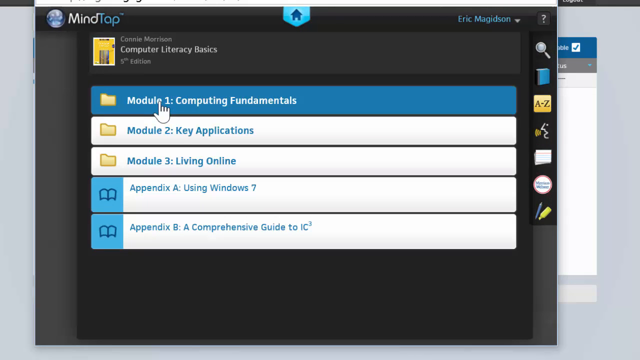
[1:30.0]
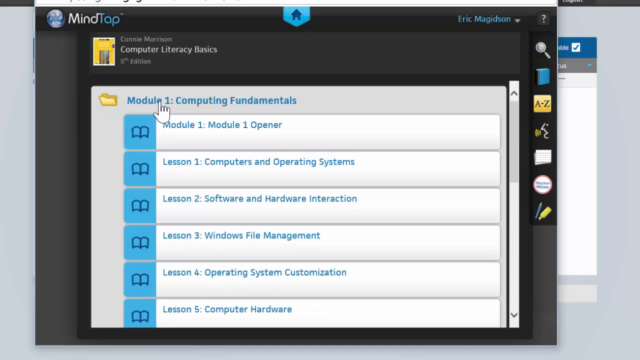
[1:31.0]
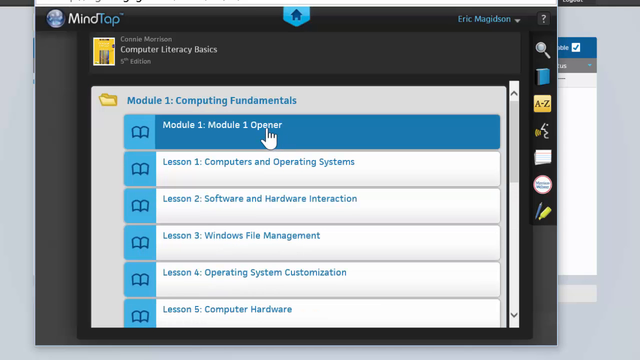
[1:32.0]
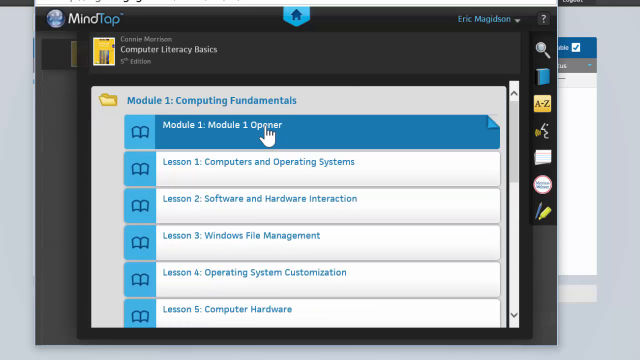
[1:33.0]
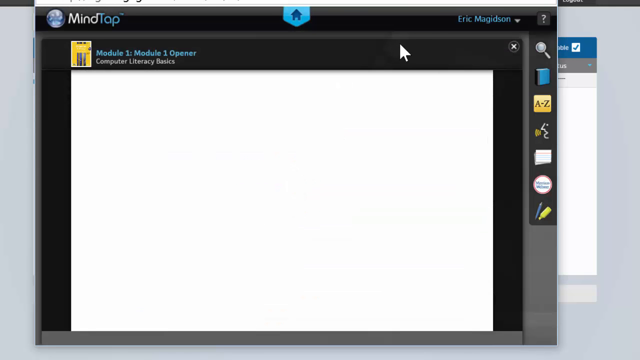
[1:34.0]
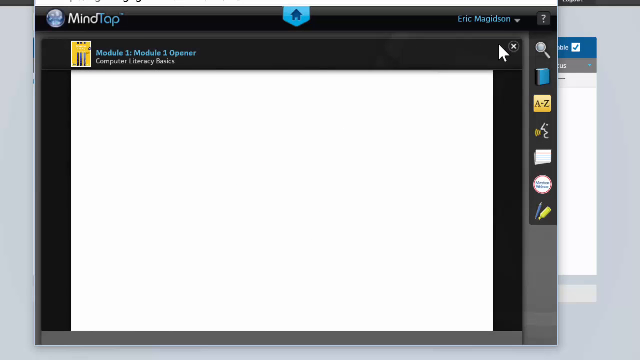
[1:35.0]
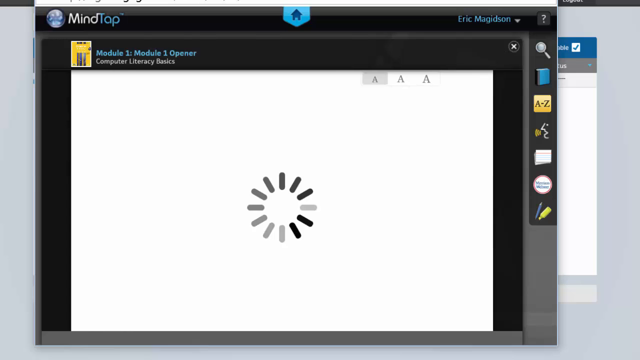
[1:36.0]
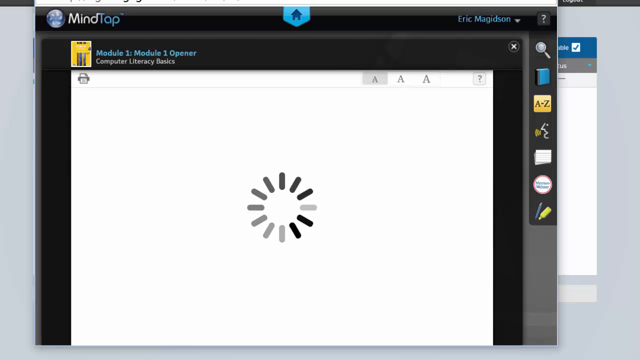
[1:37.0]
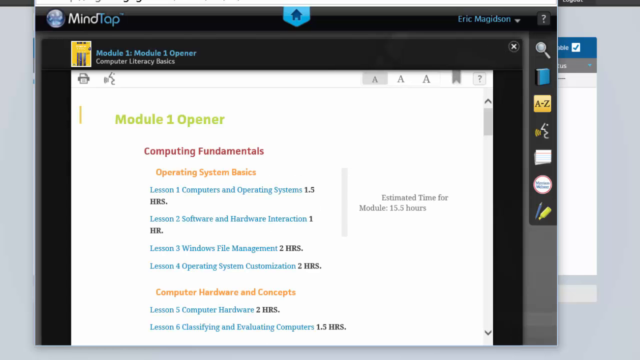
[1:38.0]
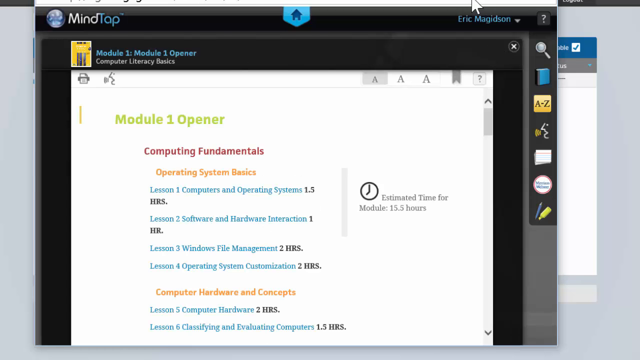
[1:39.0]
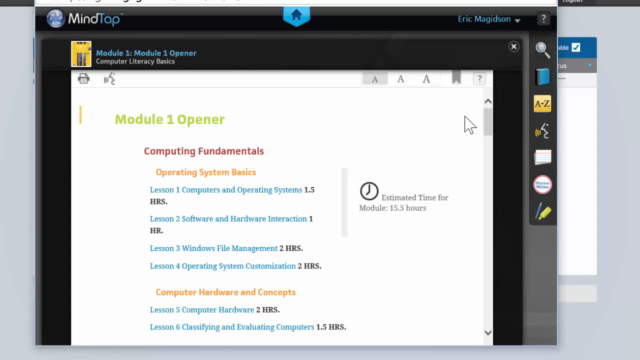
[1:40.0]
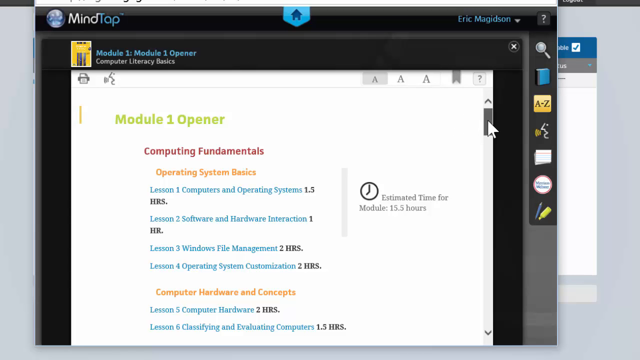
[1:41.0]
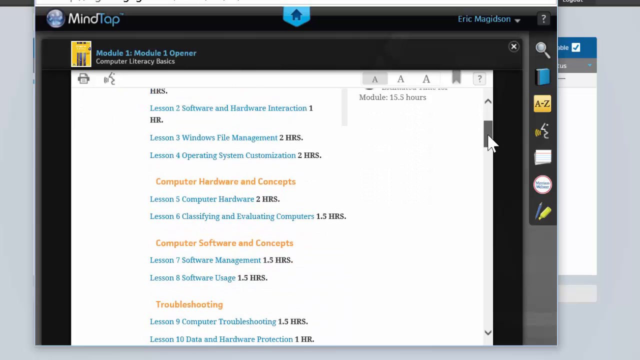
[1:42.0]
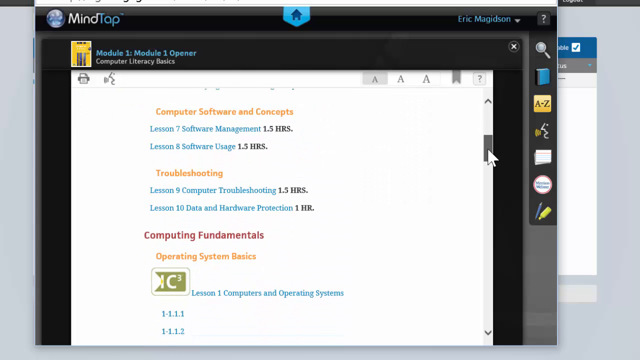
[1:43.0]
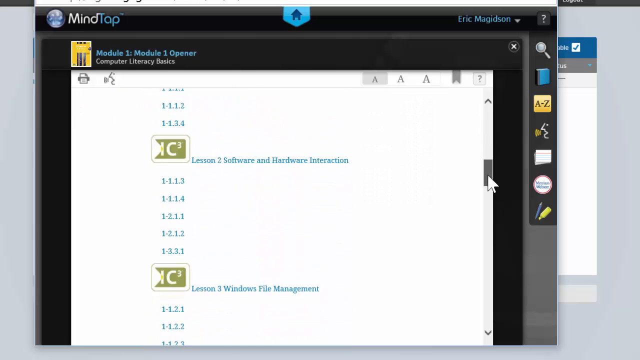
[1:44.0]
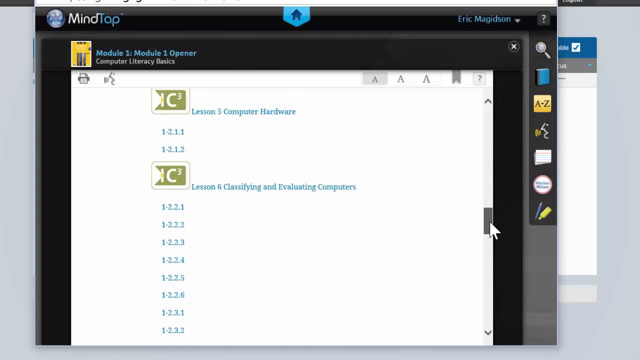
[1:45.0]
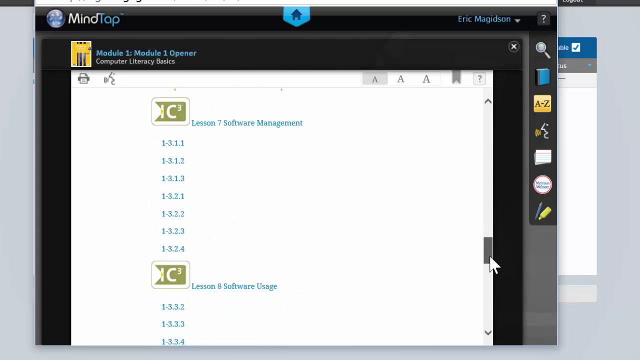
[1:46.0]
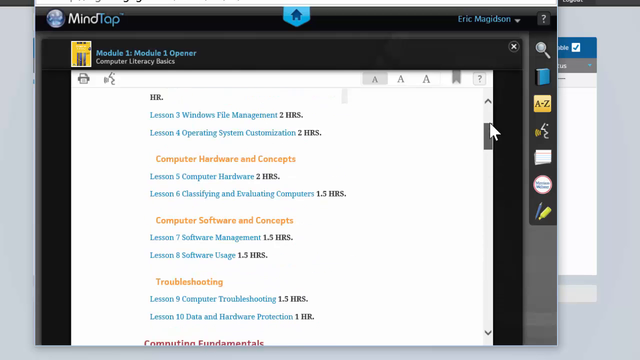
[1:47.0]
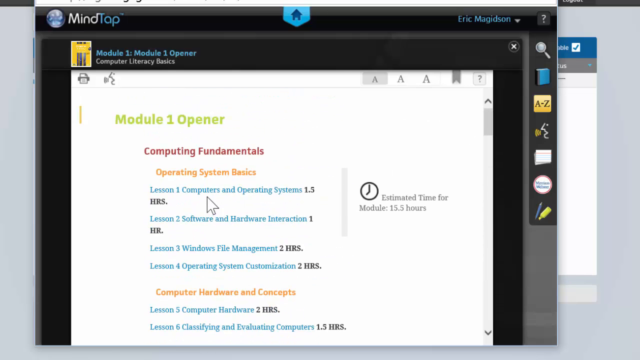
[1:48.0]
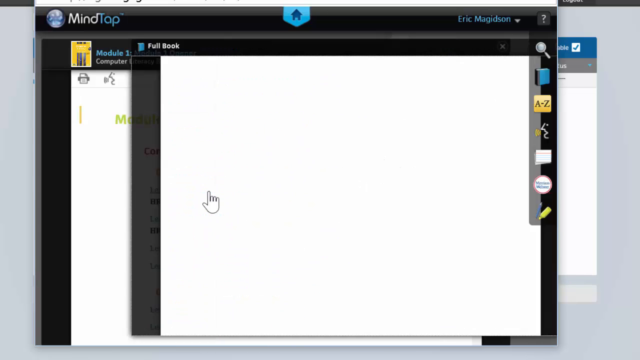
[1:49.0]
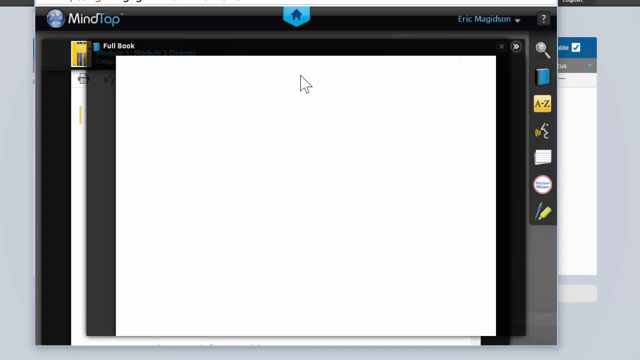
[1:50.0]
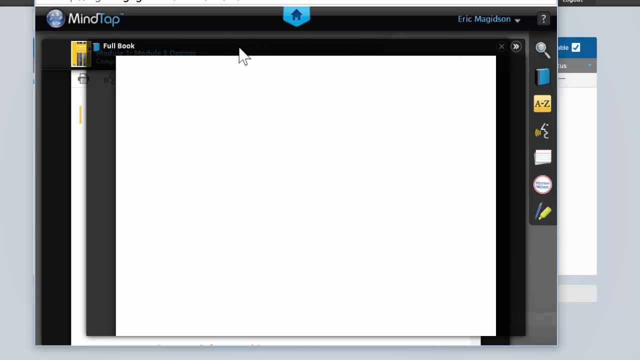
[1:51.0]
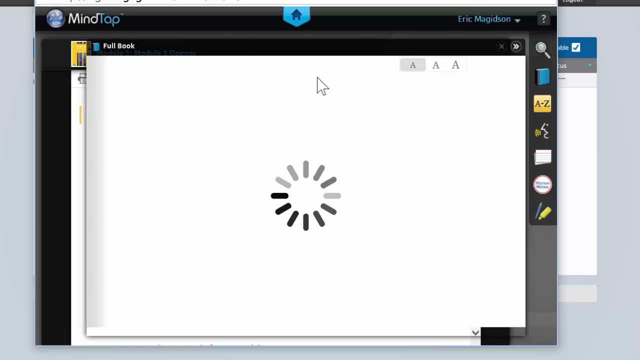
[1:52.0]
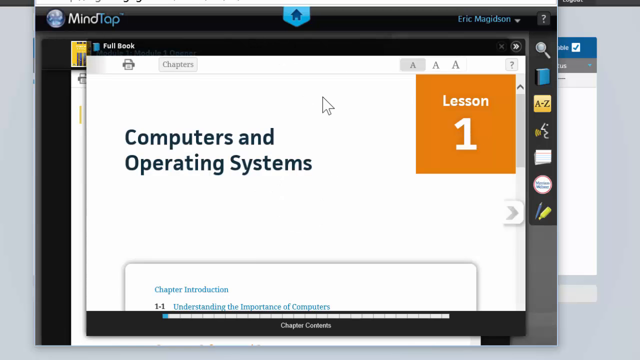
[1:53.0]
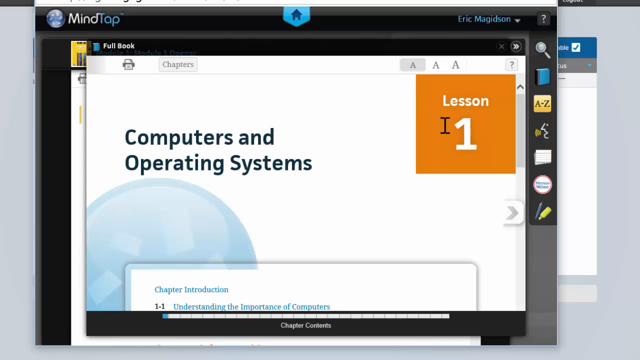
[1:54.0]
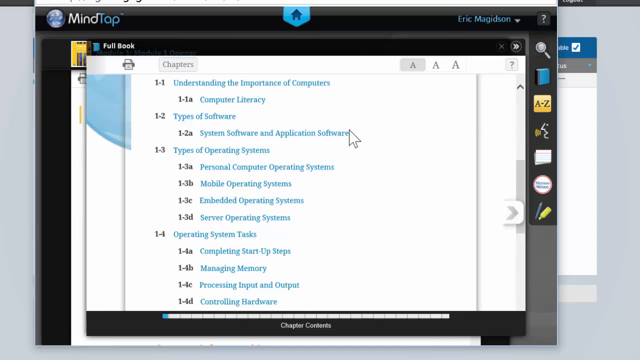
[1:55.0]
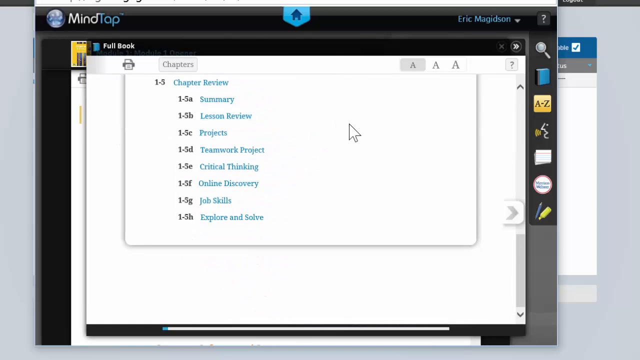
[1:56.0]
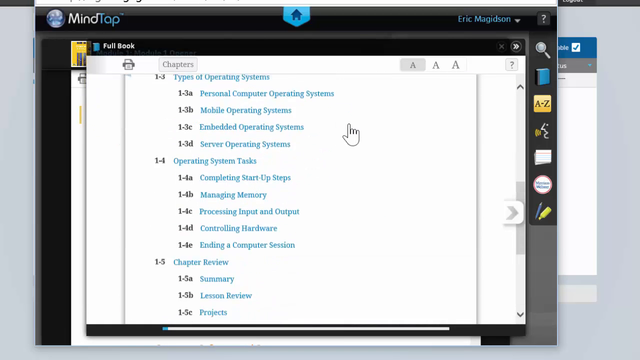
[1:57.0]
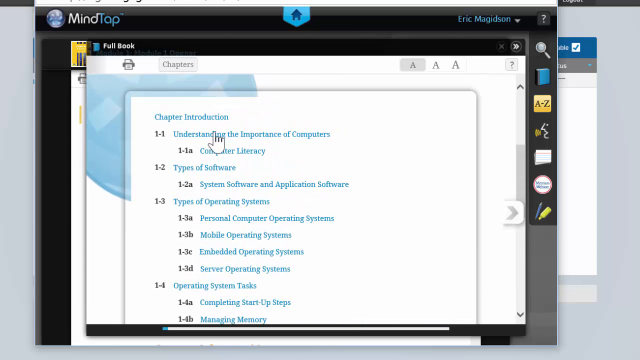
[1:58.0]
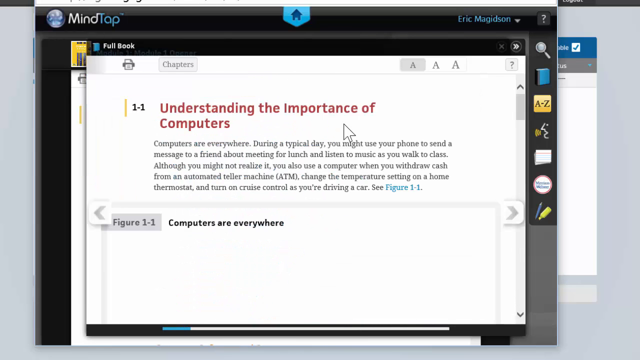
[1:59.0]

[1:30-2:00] A list is shown with a hand-shaped cursor moving within the frame. When the cursor is positioned on one of the list items, the color of its rectangular banner and of the words inside it changes: the banner background becomes blue and the text white. When the cursor is not on an item, the letters are blue and the rectangular banner is white. The cursor then moves to the upper right corner and then to the upper left corner, and another white banner appears with blue, green and orange letters inside. The cursor scrolls the web page from top to bottom, revealing other items, which are colored. In the last seconds the cursor clicks on one of these items, opening another web page with black paragraphs on a white background.